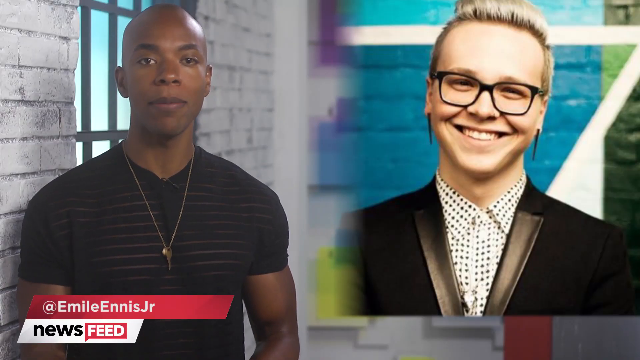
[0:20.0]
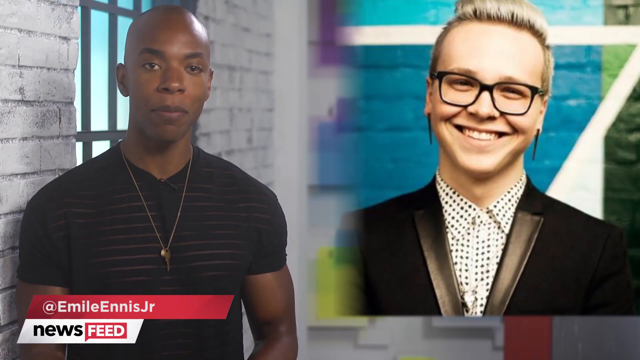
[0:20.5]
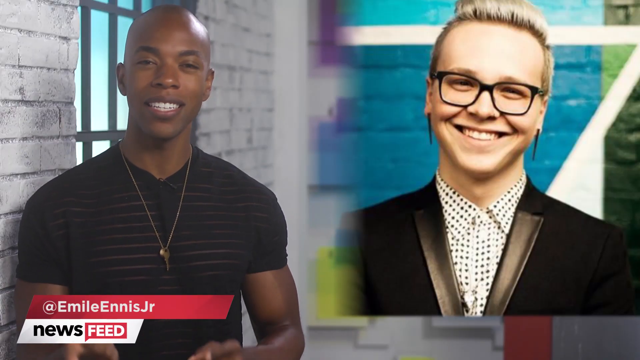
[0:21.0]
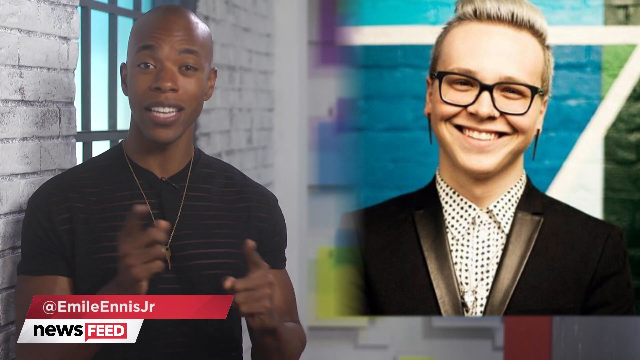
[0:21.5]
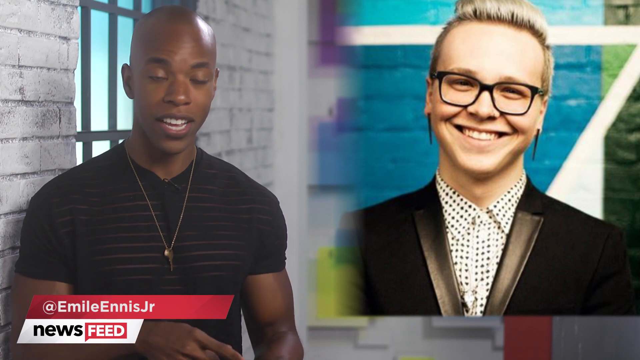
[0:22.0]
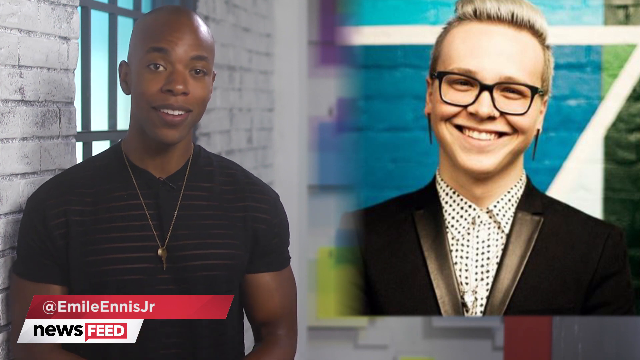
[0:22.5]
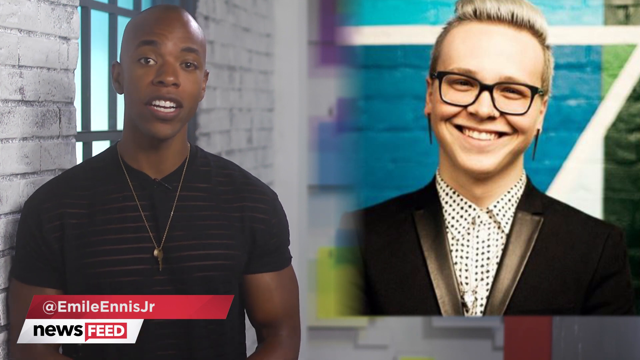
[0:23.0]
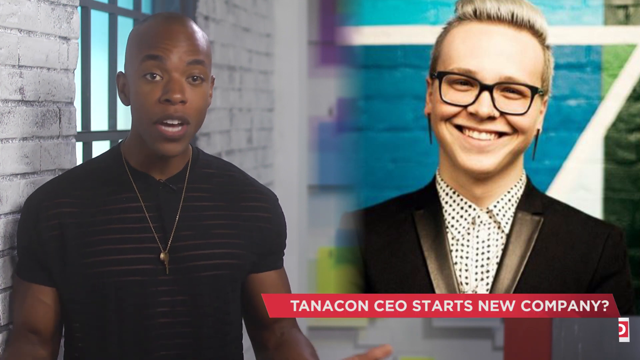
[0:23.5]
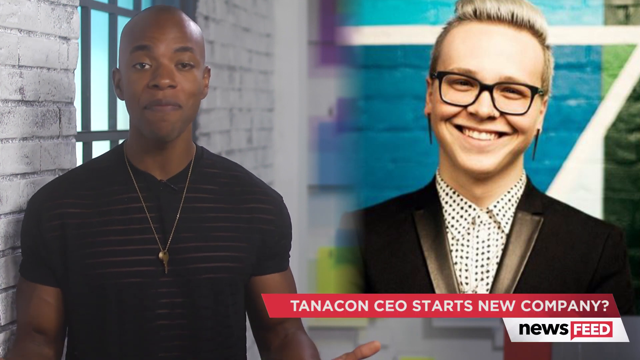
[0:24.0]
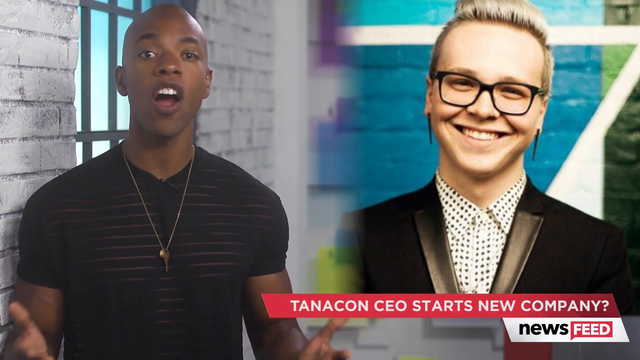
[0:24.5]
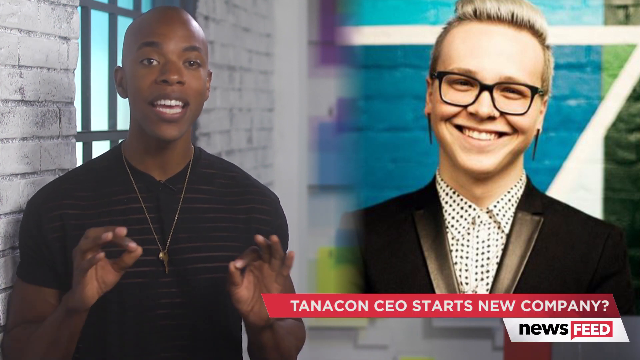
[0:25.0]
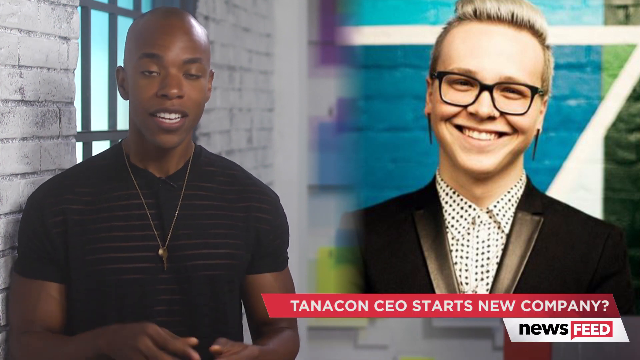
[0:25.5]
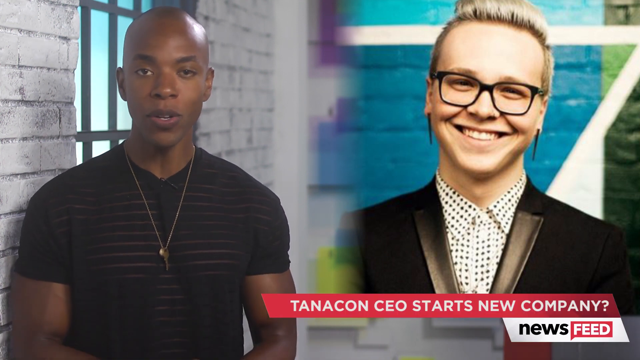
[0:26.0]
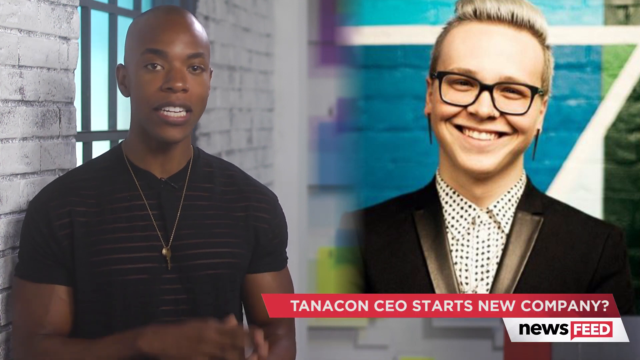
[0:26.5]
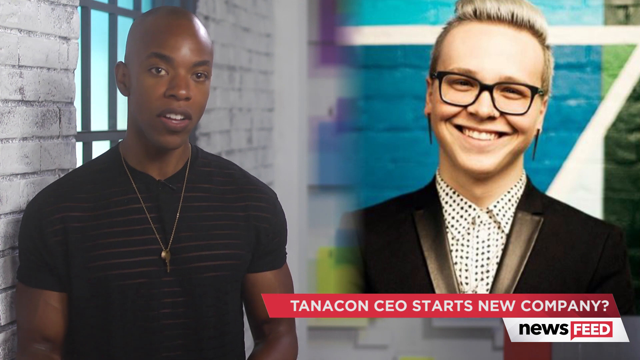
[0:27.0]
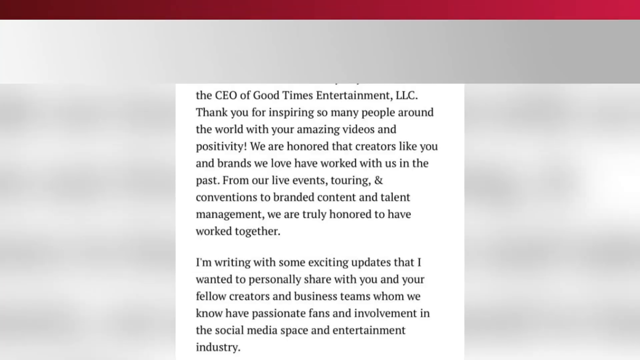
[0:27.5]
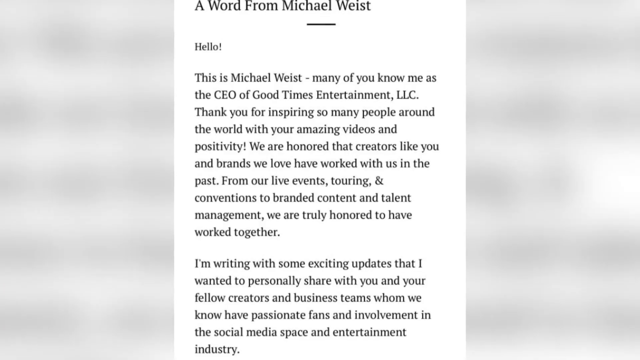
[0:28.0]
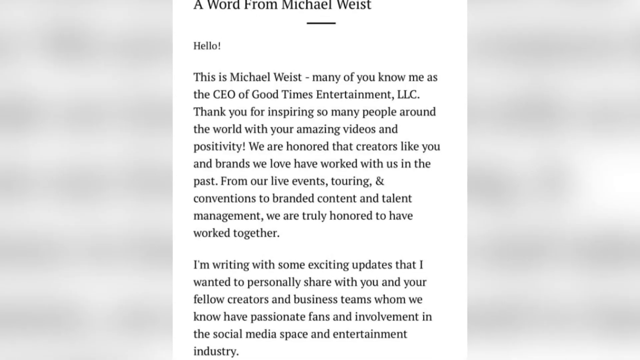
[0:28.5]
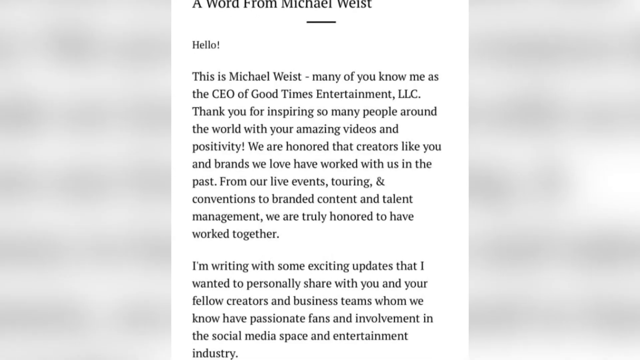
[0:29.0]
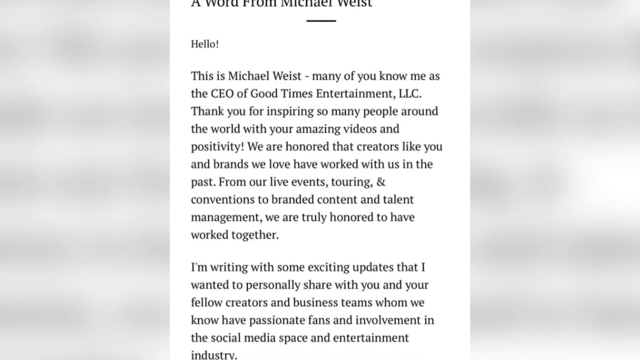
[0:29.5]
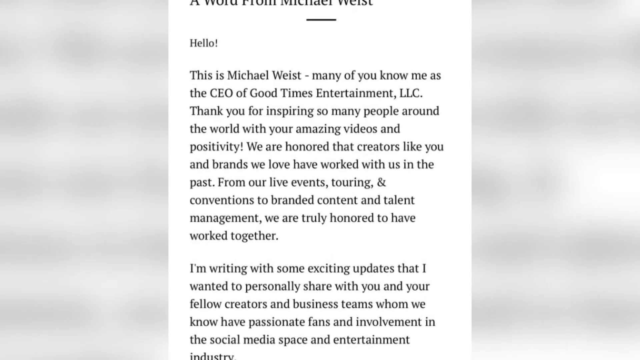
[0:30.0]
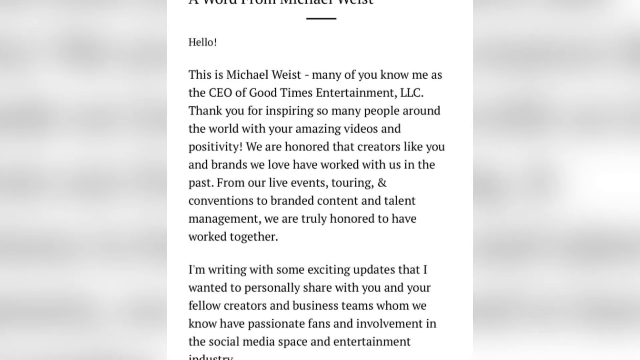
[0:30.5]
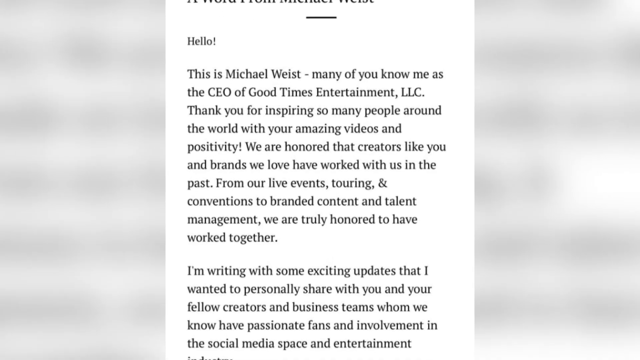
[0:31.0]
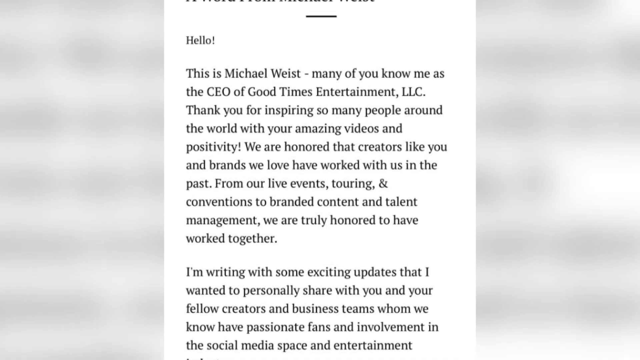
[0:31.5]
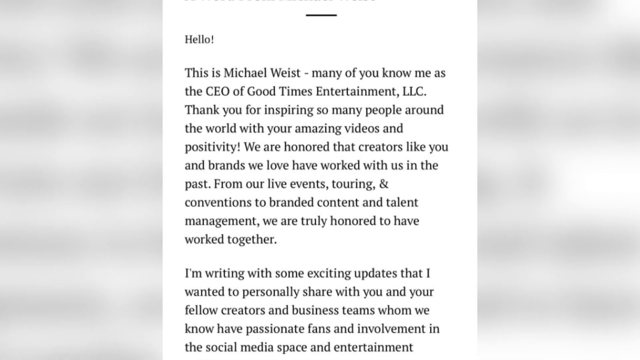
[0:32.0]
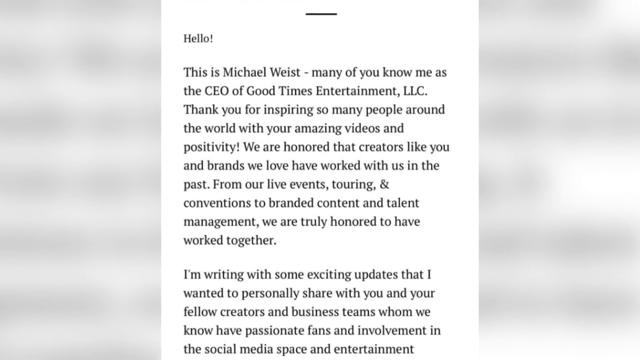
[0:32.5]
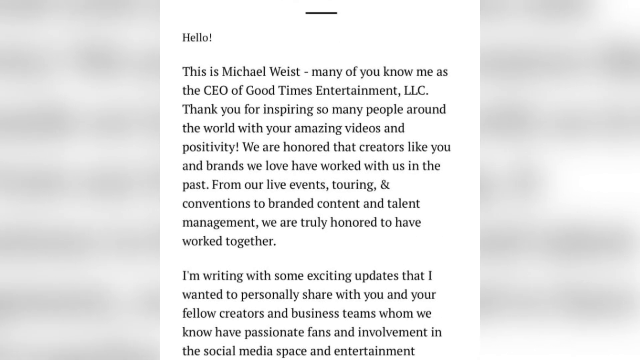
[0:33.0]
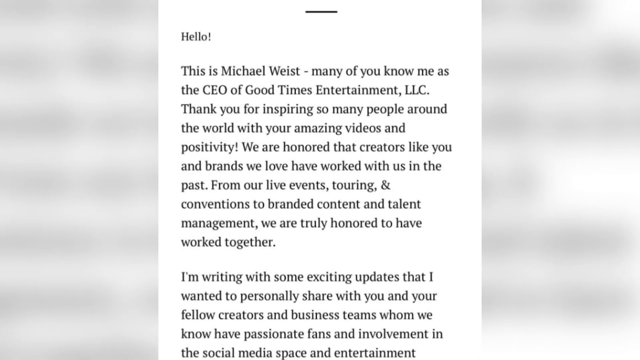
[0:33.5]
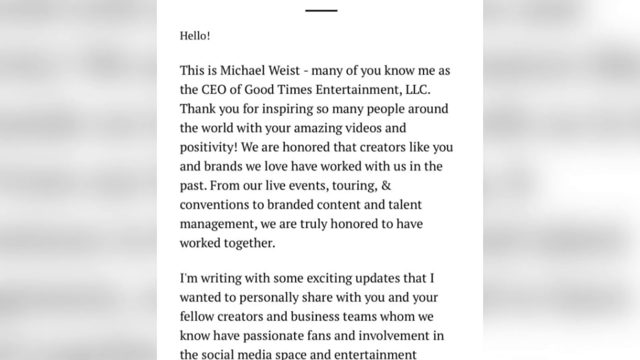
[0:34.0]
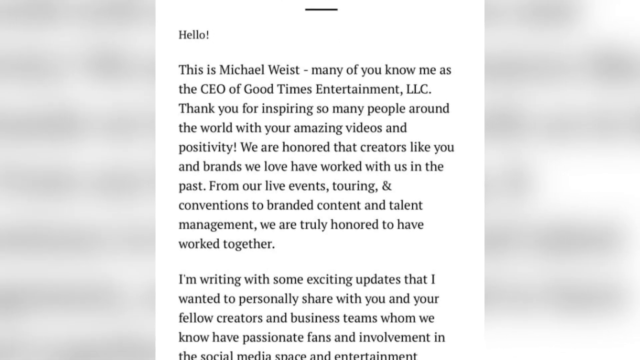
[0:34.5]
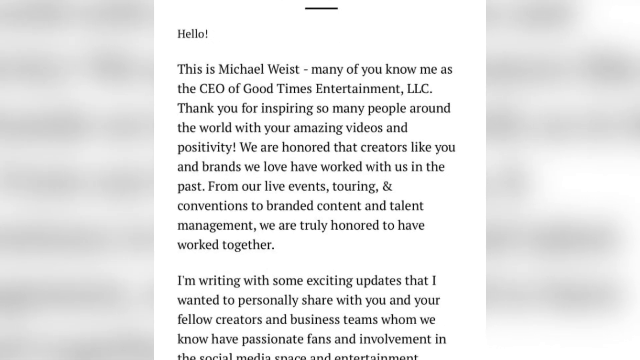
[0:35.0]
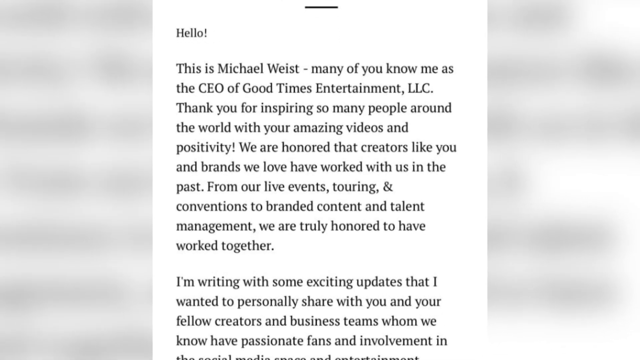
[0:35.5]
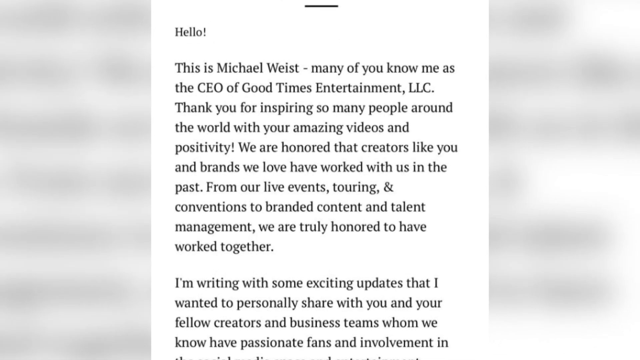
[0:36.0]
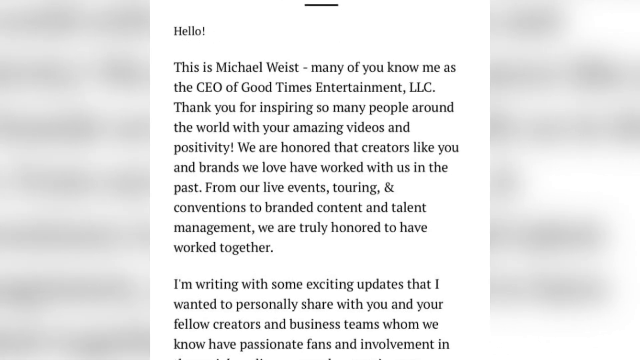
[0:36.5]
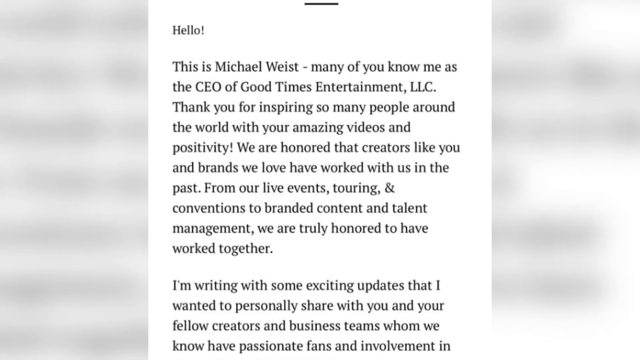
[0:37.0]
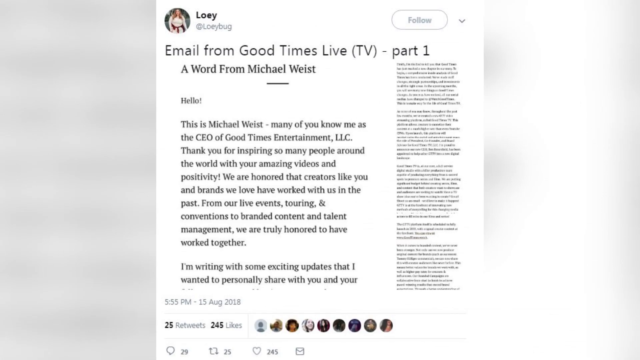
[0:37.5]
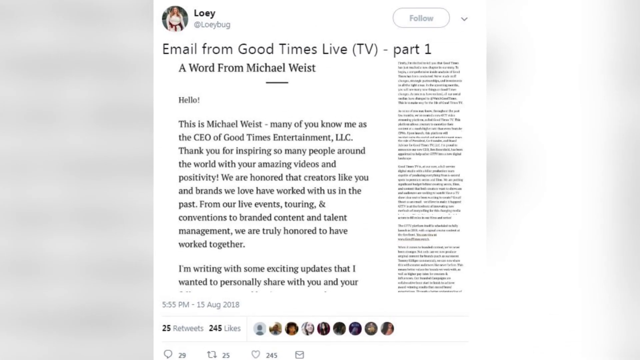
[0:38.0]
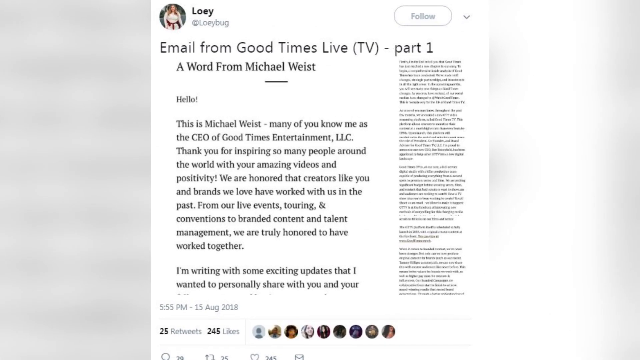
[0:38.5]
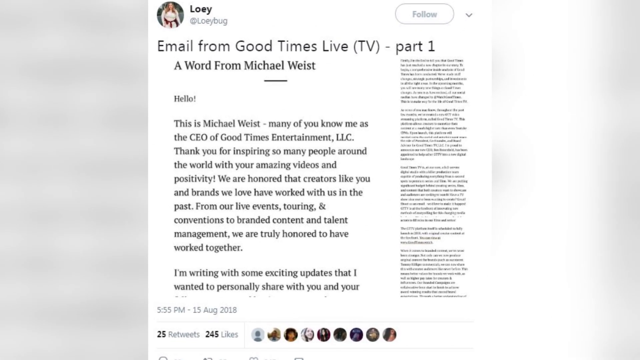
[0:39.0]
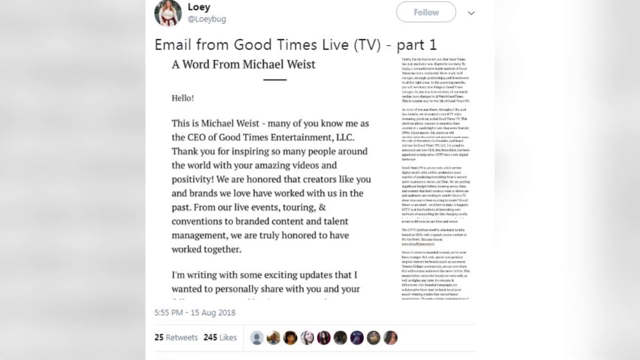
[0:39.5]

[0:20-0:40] On the right side of the newscast is a still of the person with the blonde mohawk, this time wearing long black dangling earrings, a black tuxedo jacket with a shiny lapel, and a black or white shirt with black dots all over it, buttoned all the way to the top, standing in front of a blue brick background. On the left, the news reporter is standing in front of the window by the white brick wall. An identifier comes up at the bottom in a red text box, apparently his social media handle: "at Emil Ennis Jr." Underneath it, in a white text box, is the same news feed logo seen at the beginning. On the right, a red text box pops up under the mohawked individual reading, in white capitals, "TanaCon CEO starts new company," with the news feed logo in white underneath. The view then switches to an article, white with black text, with out-of-focus black and white text in the background. Then comes another article, with the camera seemingly panning in close on lots of black text.